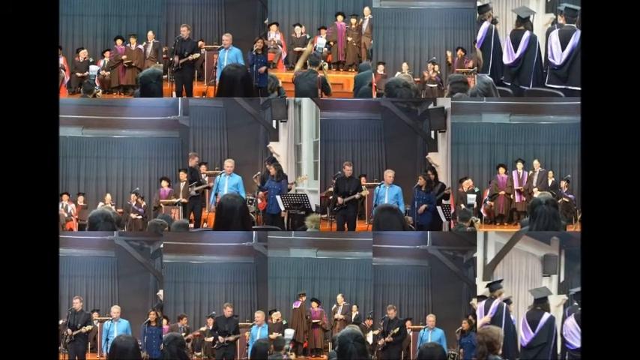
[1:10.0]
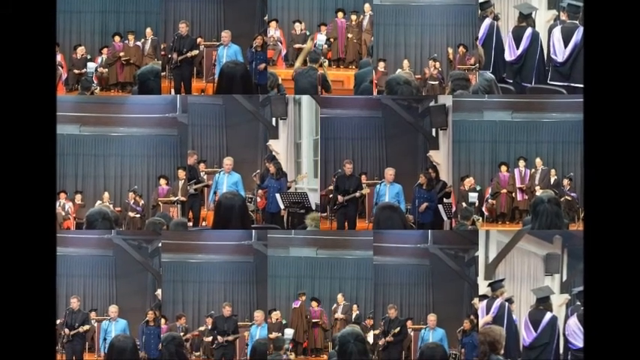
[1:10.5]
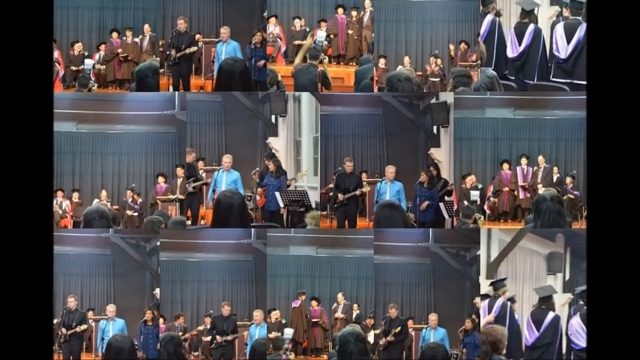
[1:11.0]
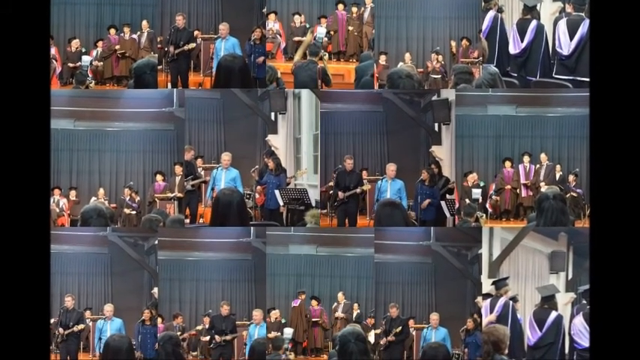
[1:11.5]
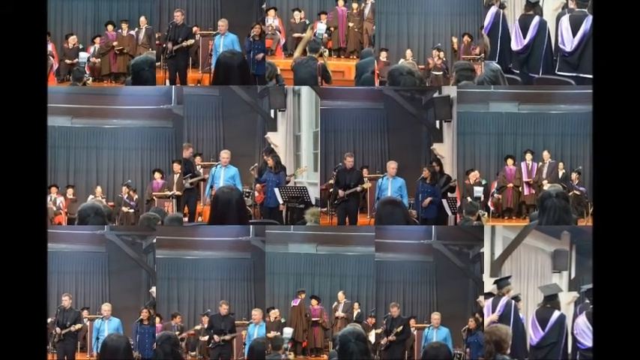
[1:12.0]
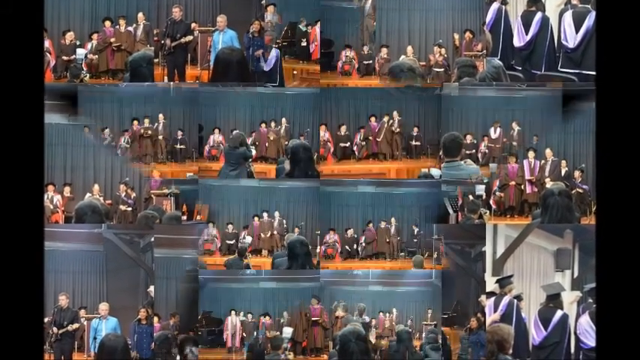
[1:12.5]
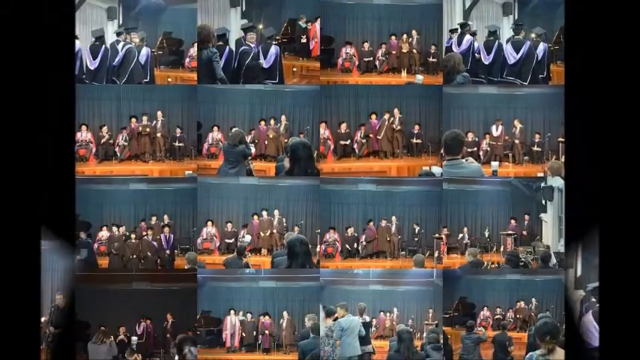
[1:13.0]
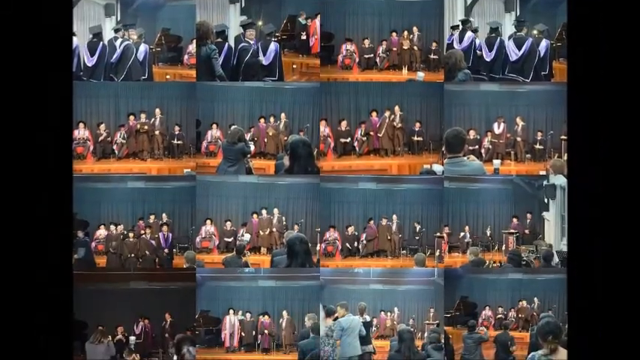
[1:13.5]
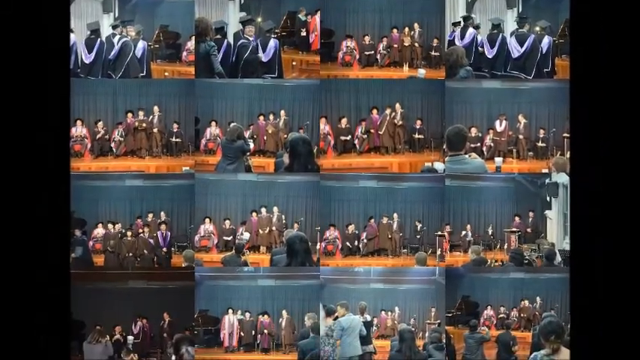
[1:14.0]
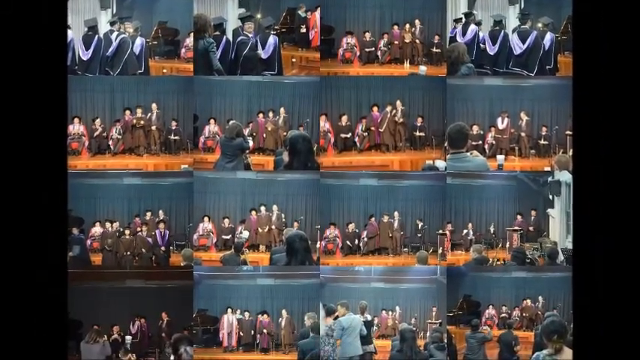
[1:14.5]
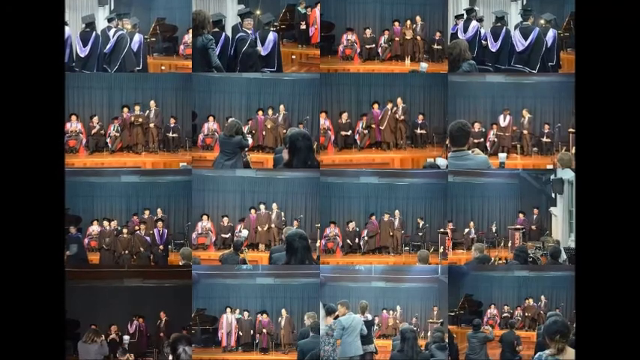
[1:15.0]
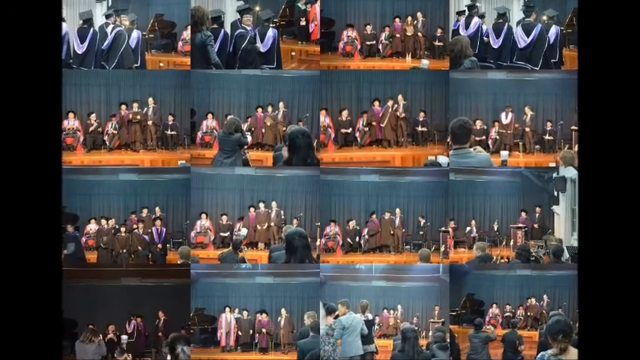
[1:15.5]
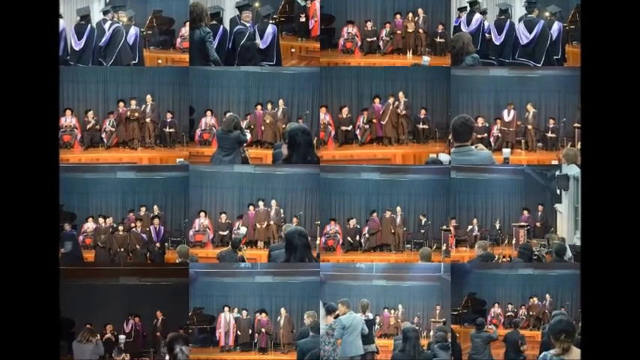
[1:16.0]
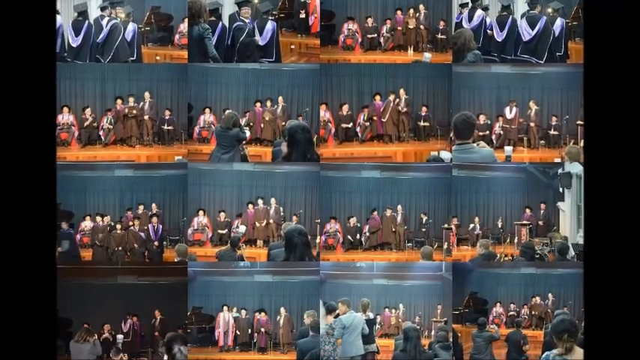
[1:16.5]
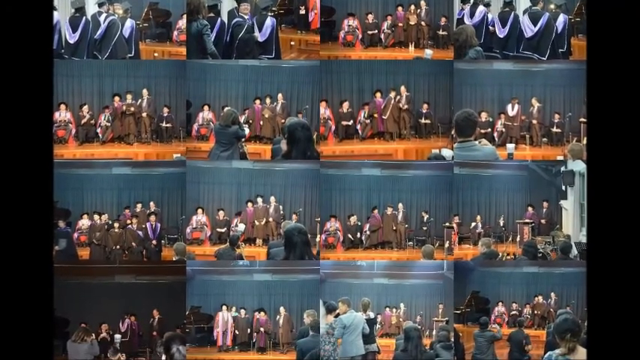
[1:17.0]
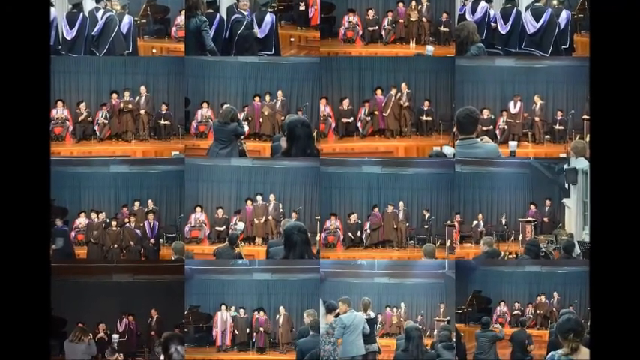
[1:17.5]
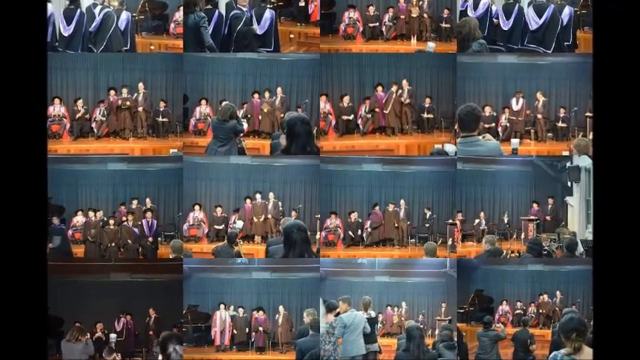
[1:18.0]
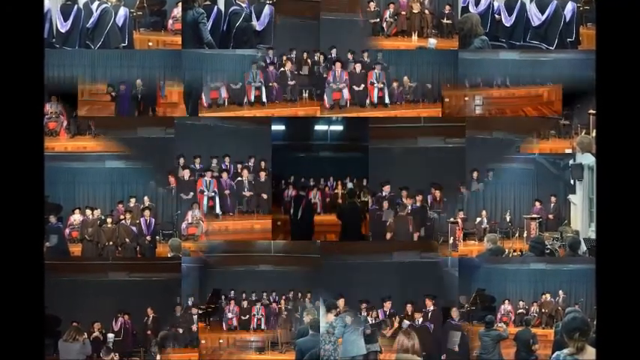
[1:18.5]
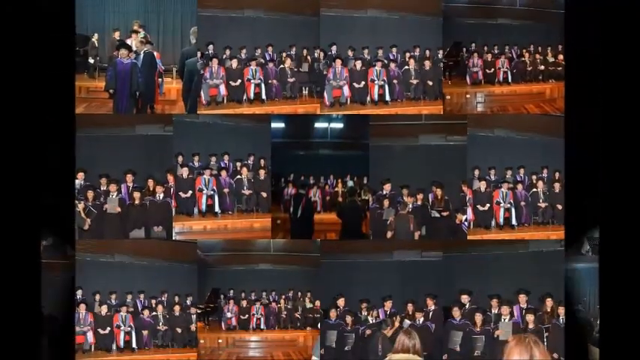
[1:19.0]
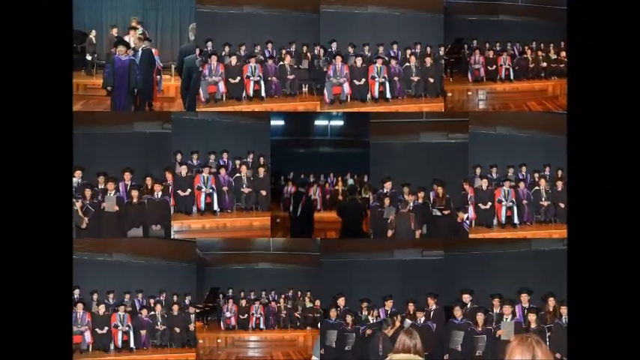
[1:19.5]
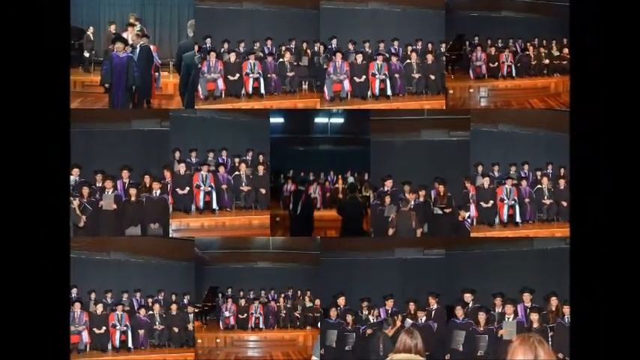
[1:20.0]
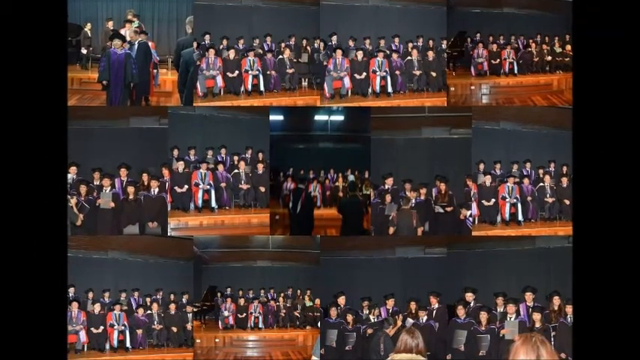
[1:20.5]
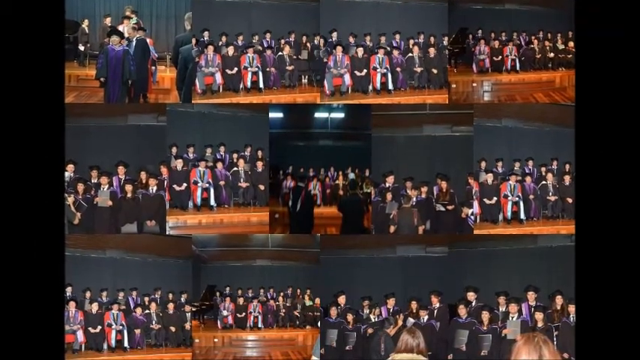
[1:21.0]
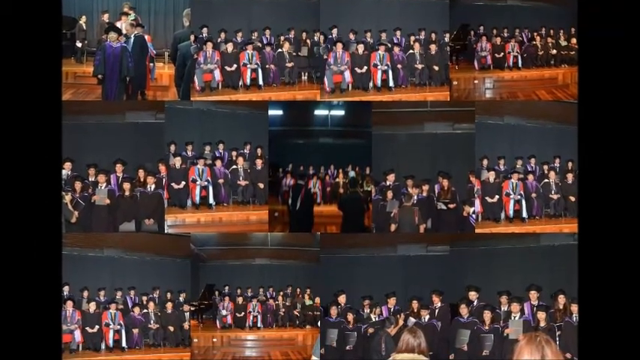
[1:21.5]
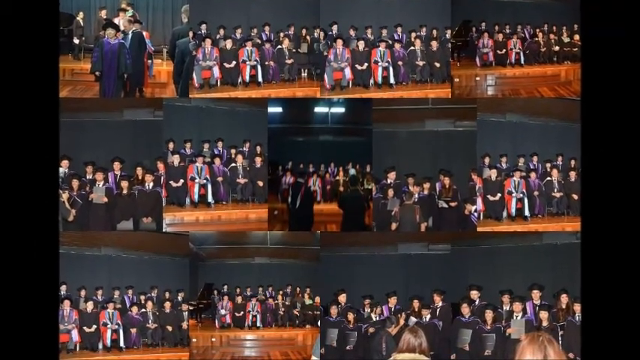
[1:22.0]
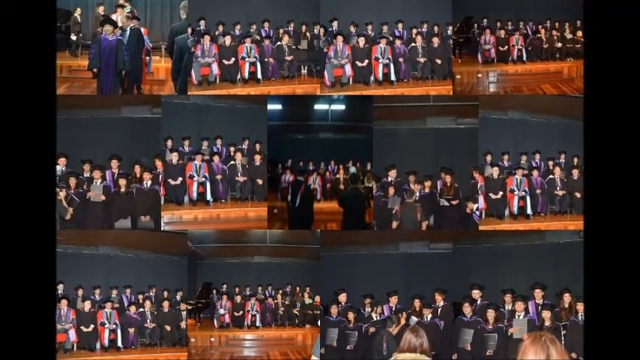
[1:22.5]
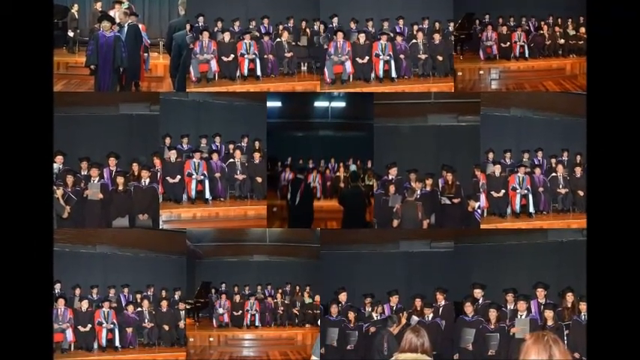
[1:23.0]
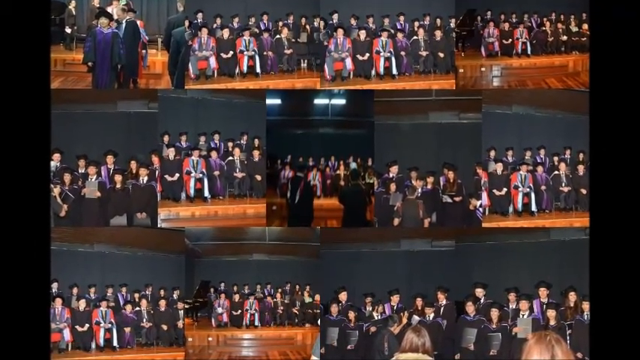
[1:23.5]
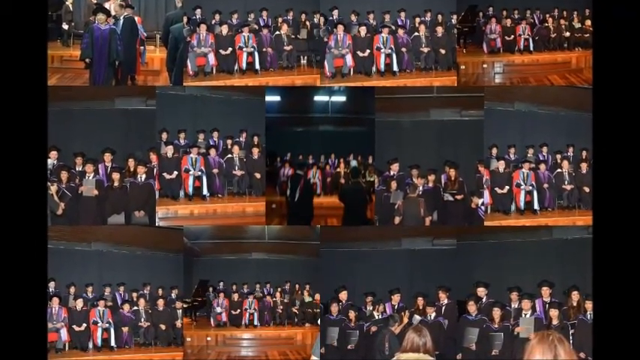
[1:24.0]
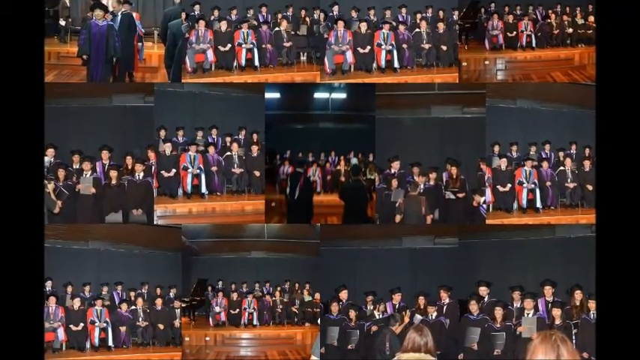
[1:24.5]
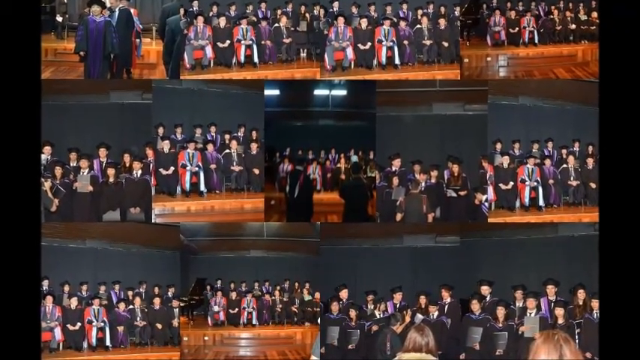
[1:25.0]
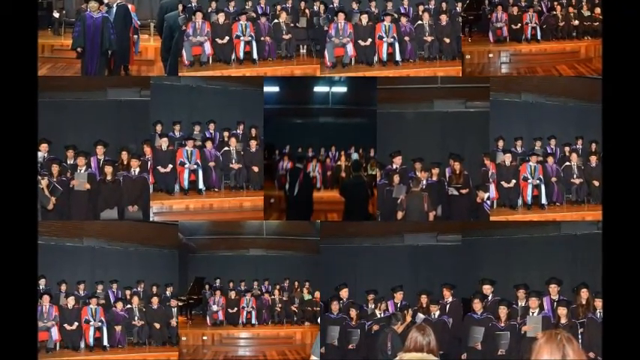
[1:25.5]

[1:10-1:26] More collages follow. The first focuses on the stage, with photos that seem to show a few people on stage, maybe a couple of graduates and the president. Most photos in the second collage show what seems to be a group photo: a large group of maybe 20 people sitting down, probably the graduates on the back row and lecturers, professors, or more likely university officials on the front row. There seems to be a professional photographer taking these photos. Each collage holds about 16 photos, with quite a bit of variety between them.